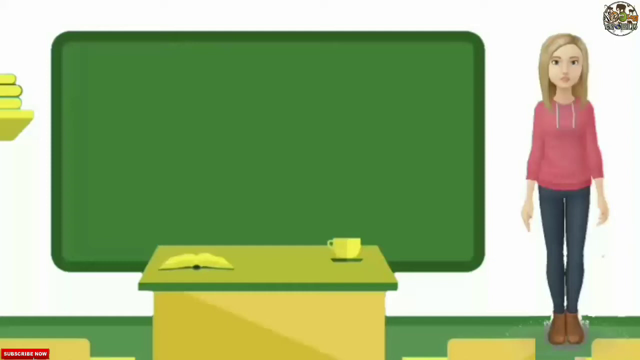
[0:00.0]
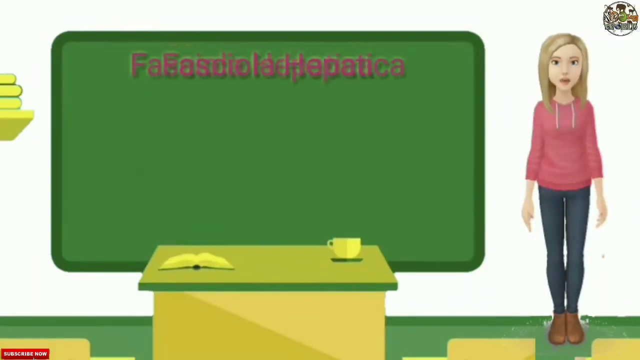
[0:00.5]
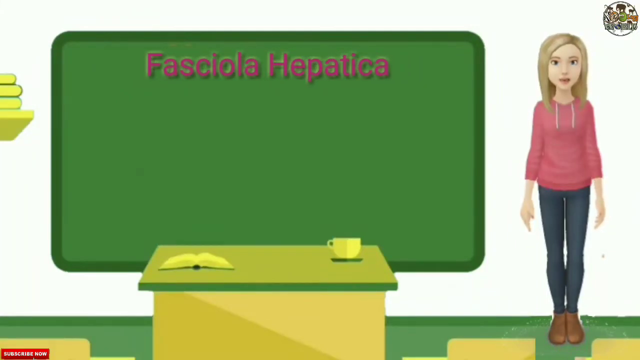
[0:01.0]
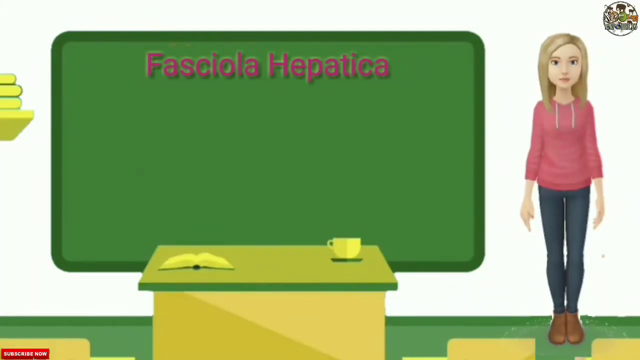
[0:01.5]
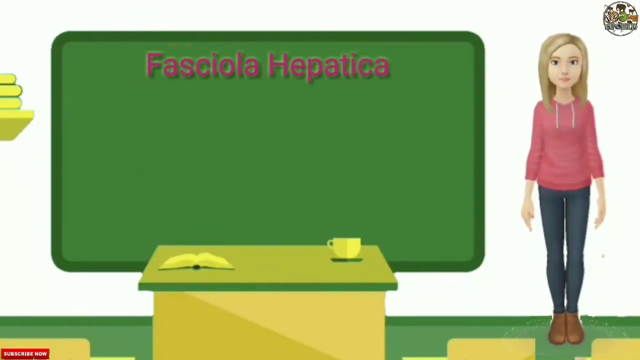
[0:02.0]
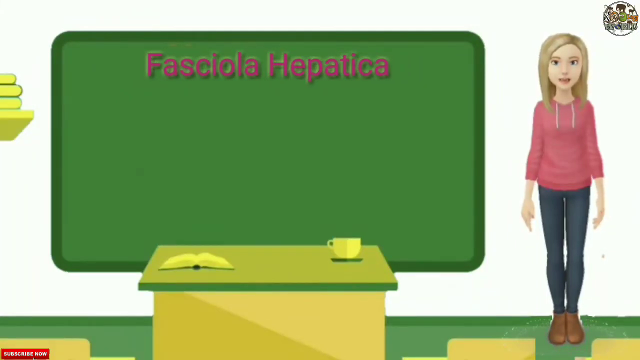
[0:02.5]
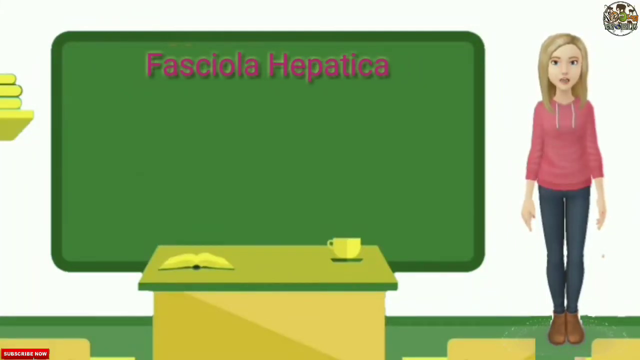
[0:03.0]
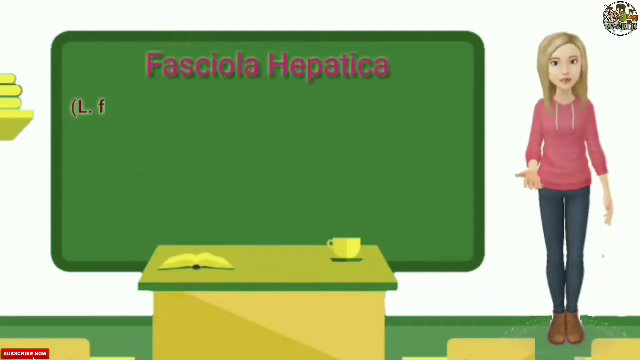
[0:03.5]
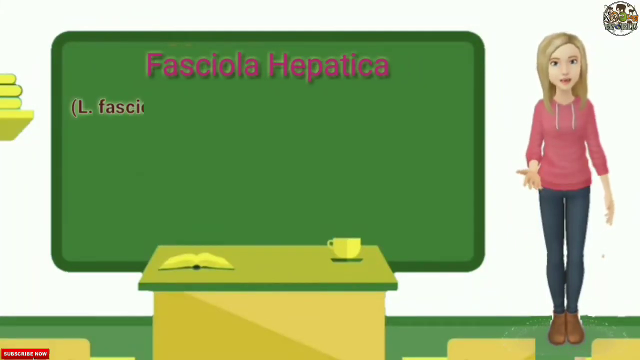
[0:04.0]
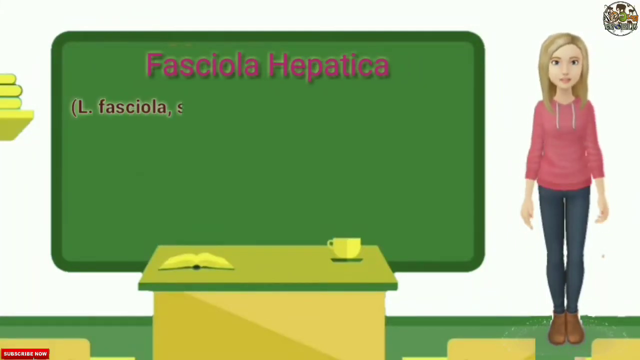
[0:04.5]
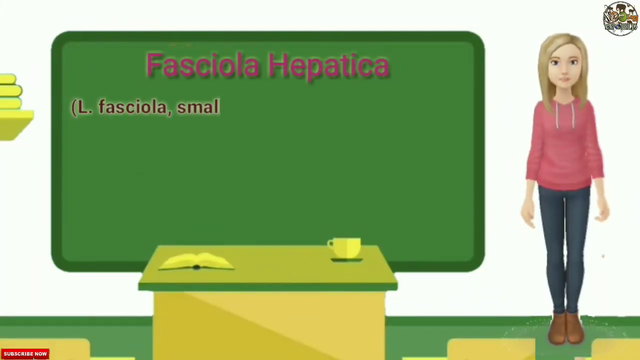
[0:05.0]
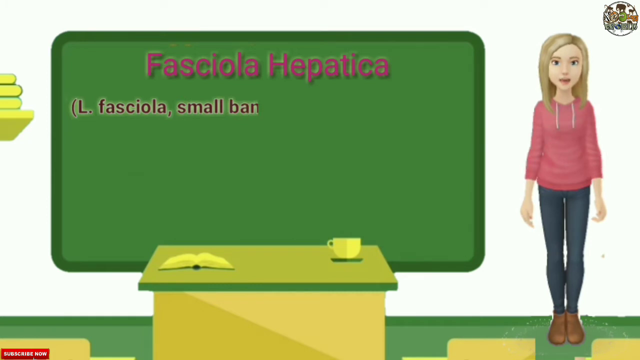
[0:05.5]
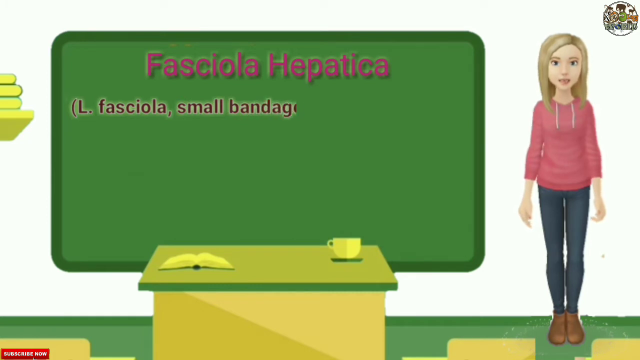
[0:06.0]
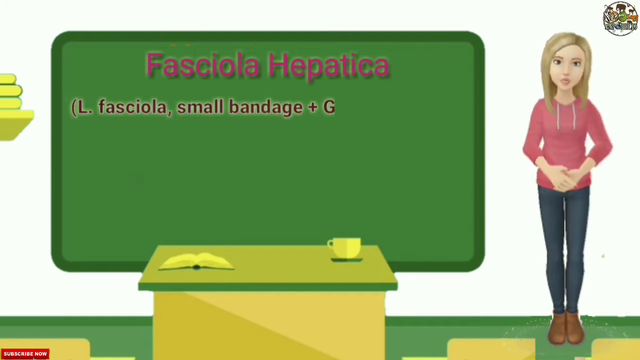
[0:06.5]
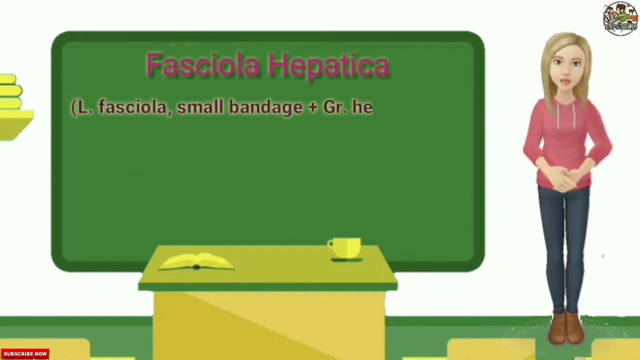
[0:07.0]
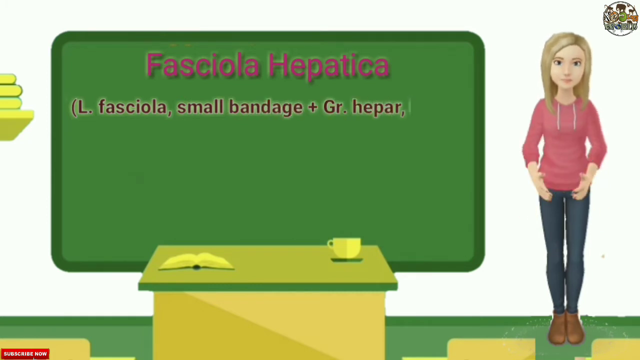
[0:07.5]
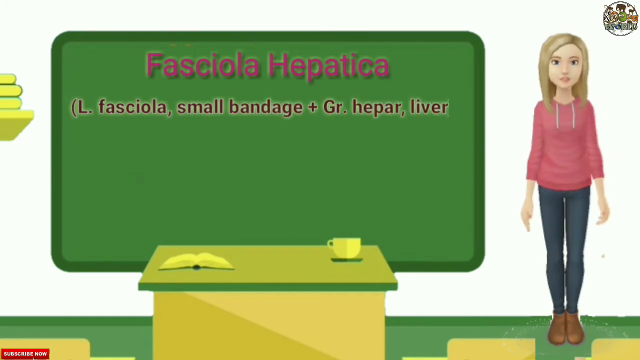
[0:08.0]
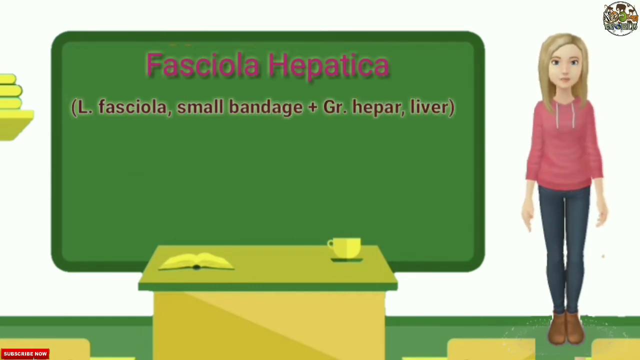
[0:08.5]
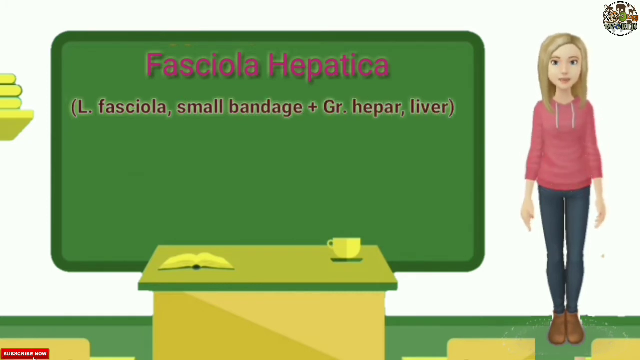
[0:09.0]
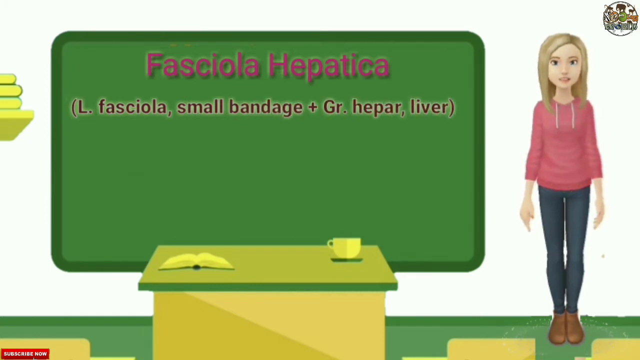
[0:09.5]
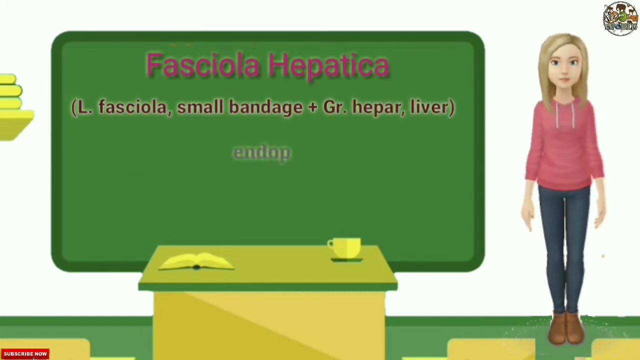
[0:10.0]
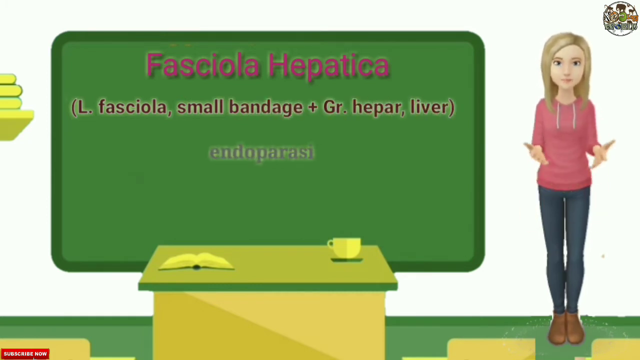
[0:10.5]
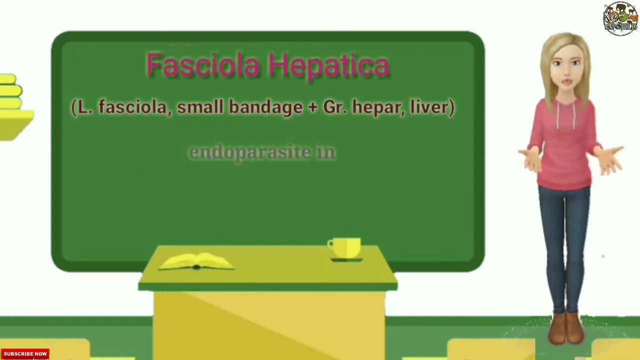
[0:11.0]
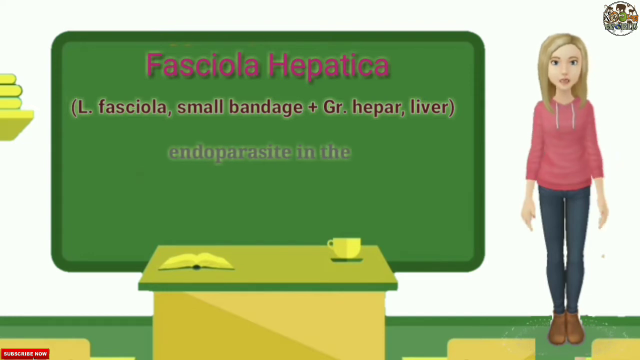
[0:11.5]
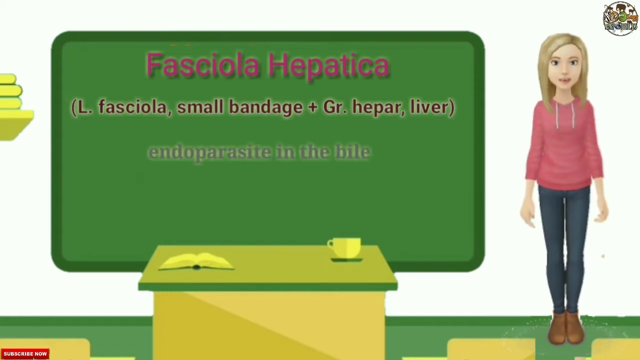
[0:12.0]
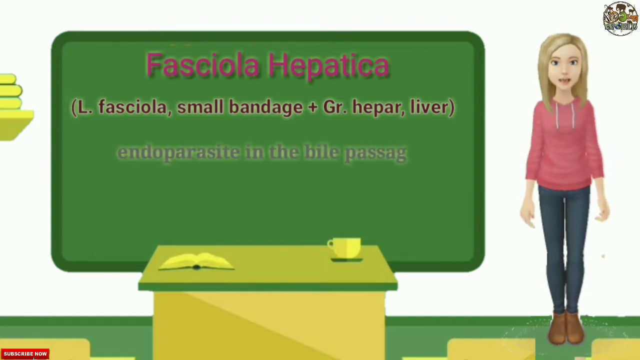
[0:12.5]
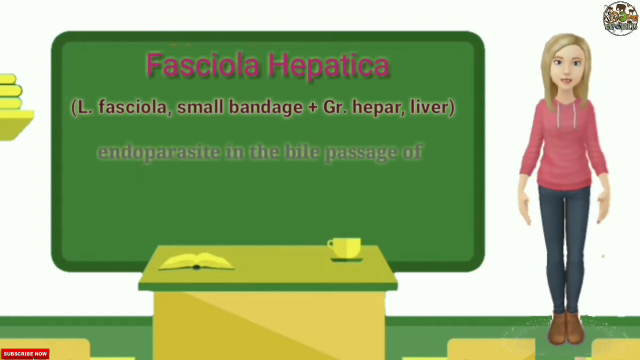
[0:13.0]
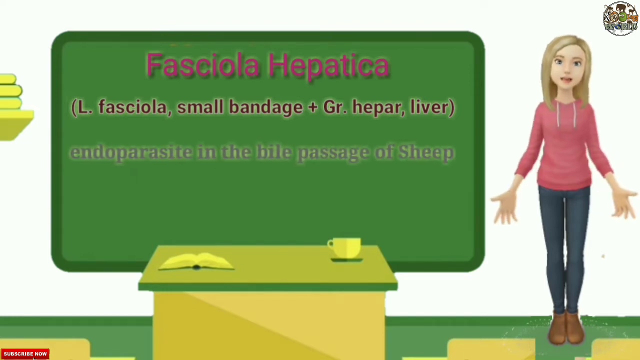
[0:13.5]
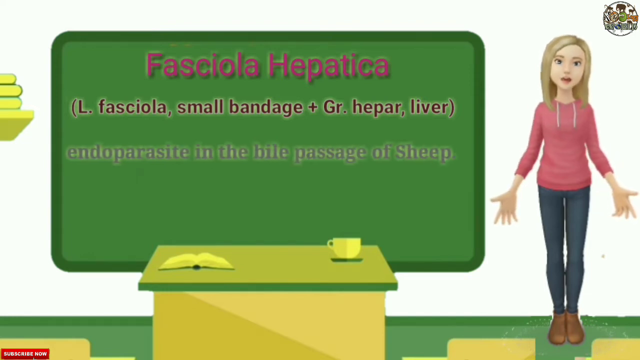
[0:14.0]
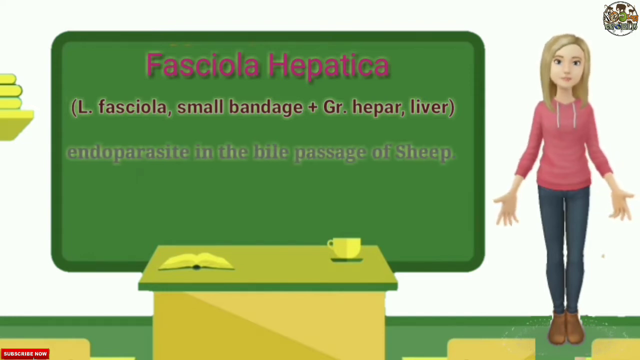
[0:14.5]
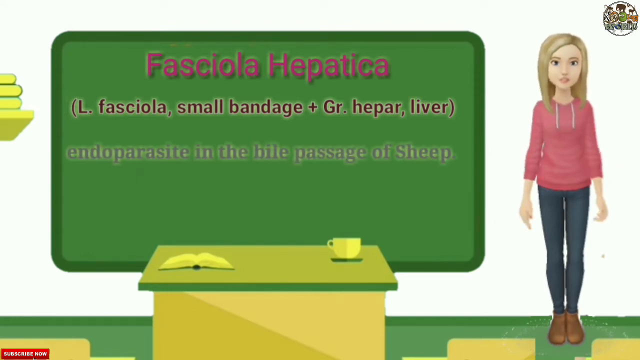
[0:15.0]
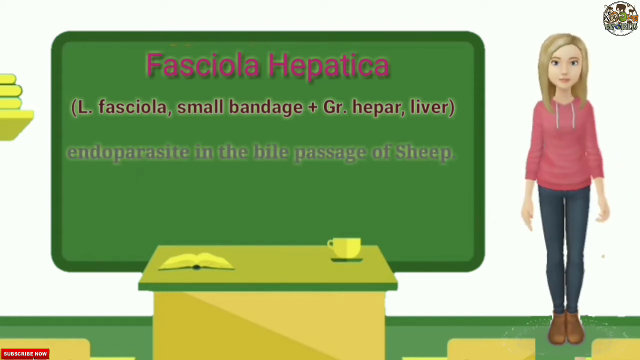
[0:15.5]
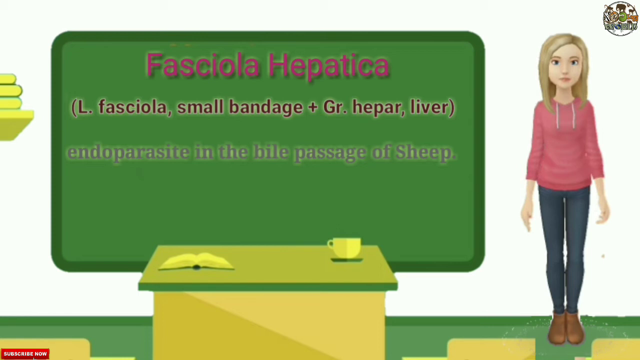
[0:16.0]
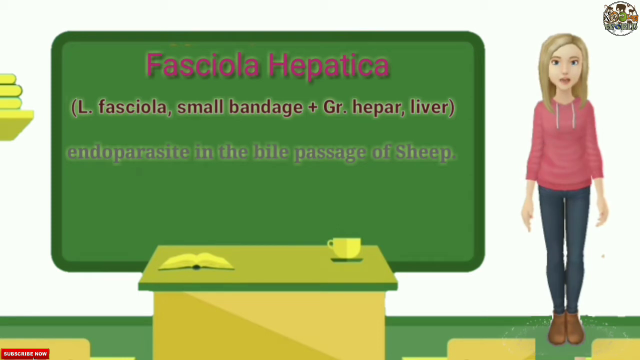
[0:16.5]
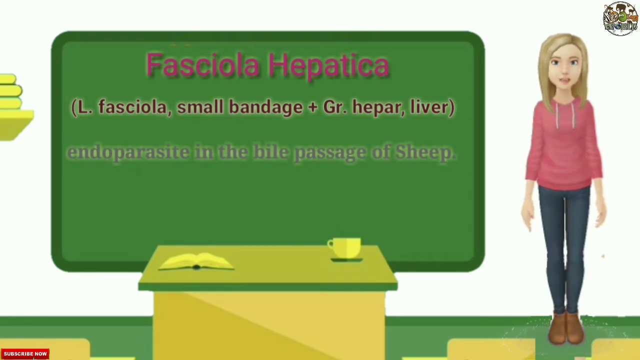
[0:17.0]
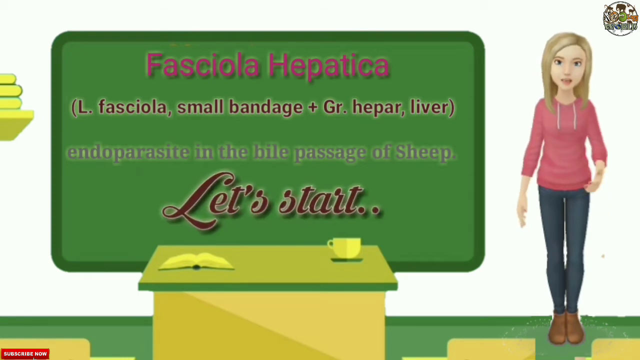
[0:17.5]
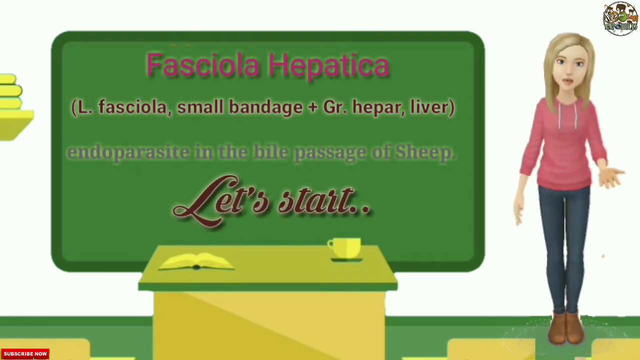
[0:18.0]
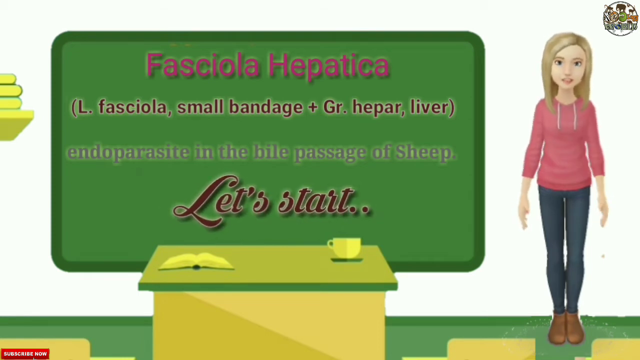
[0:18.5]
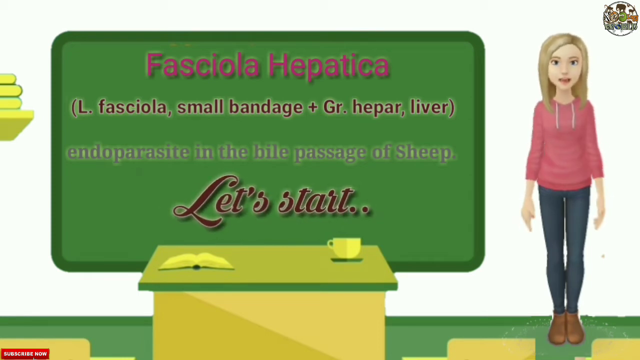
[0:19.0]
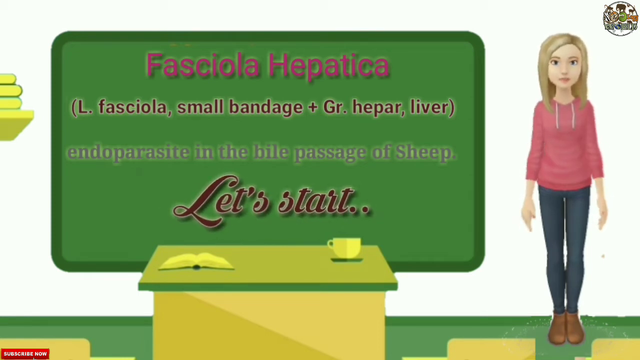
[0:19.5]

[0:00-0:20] The entire video is animated, with no real objects or people. A woman with blonde hair, wearing a pink hoodie and blue jeans, stands on the right side of a classroom blackboard with "fasciola hepatica" written on it. In front of the blackboard is a green table with a coffee mug and a book on it. The woman begins talking and gesturing with her hands as text is generated on the blackboard. Part of the text reads "Endoparasite in the bile passage of sheep" and "Let's start." The text is written in different fonts, and it all disappears from the green blackboard before the scene switches.